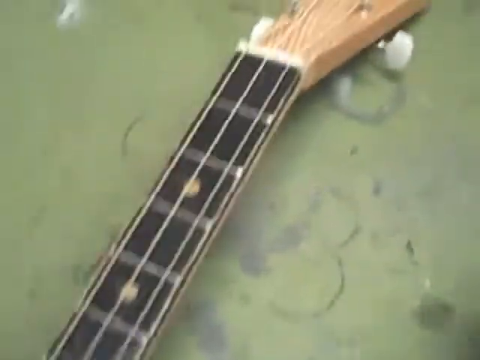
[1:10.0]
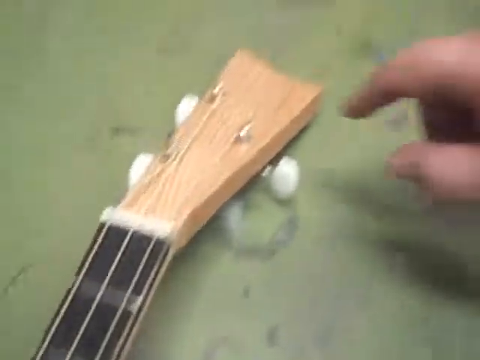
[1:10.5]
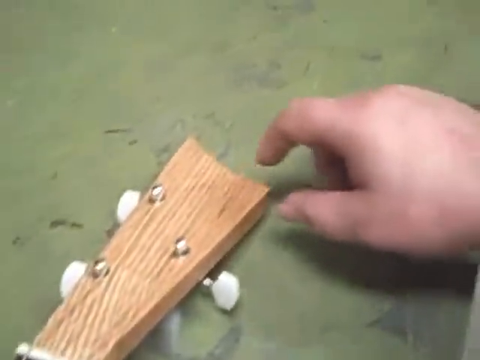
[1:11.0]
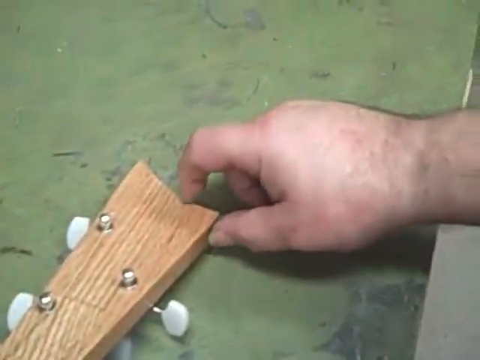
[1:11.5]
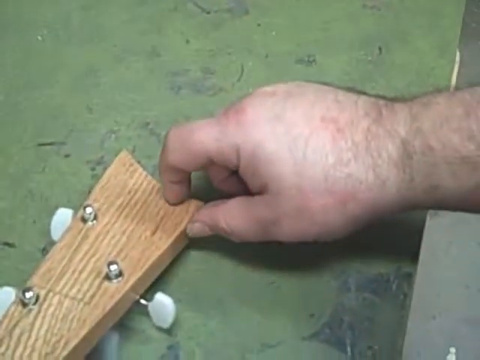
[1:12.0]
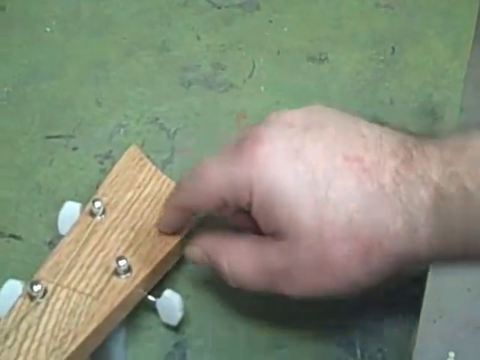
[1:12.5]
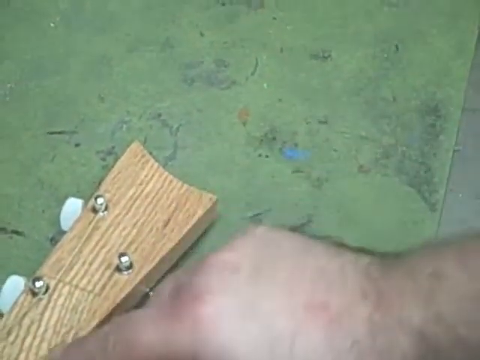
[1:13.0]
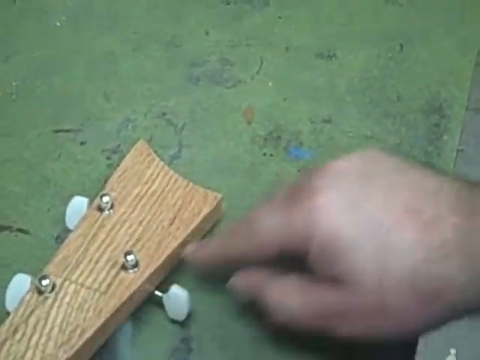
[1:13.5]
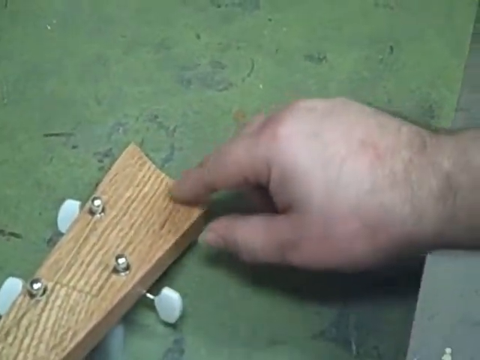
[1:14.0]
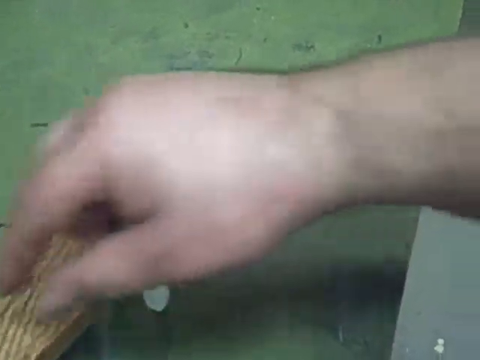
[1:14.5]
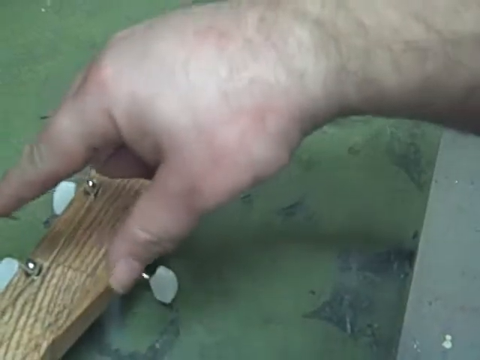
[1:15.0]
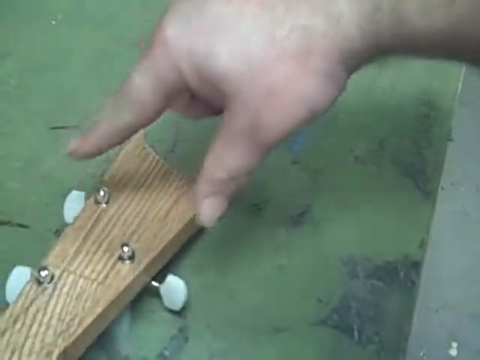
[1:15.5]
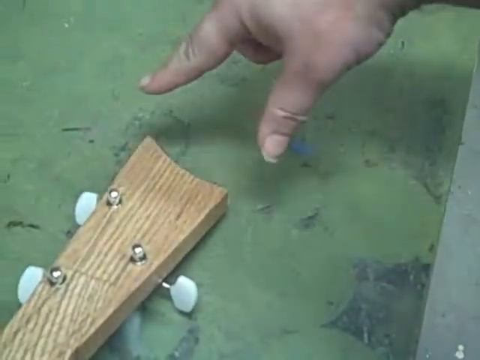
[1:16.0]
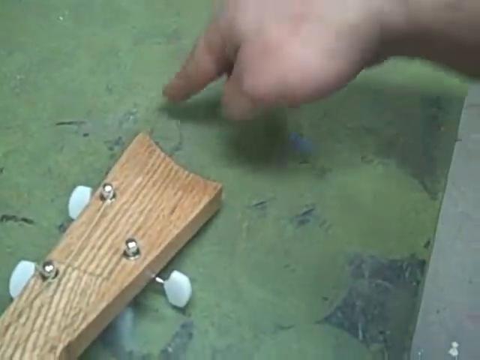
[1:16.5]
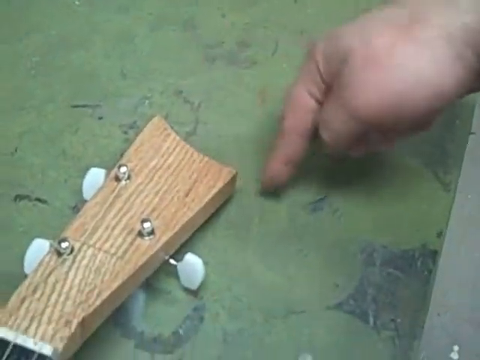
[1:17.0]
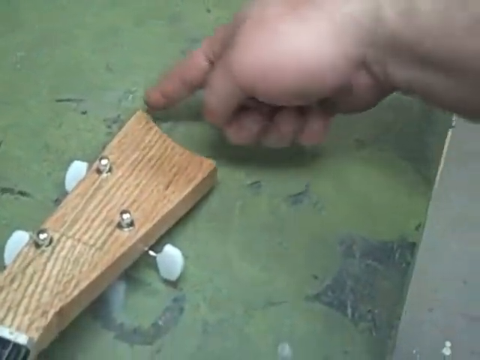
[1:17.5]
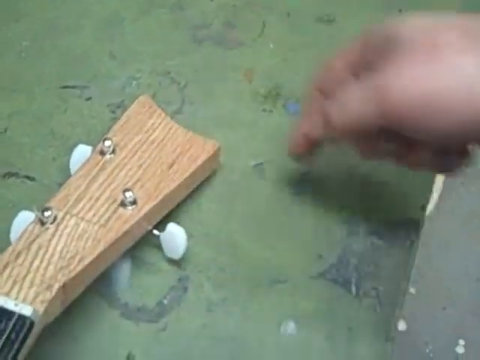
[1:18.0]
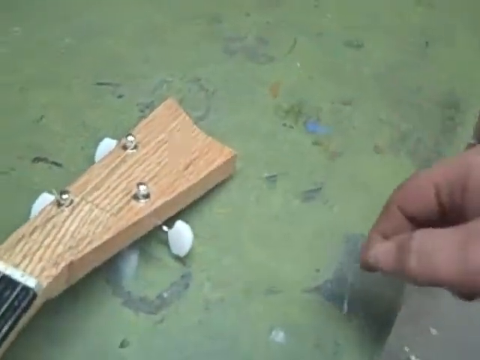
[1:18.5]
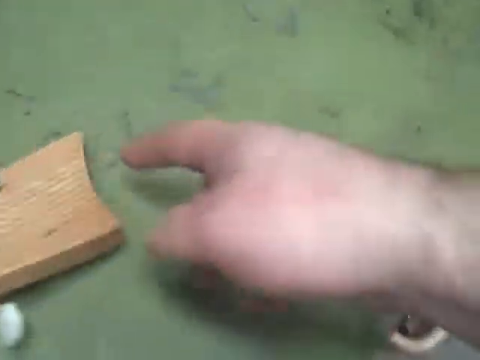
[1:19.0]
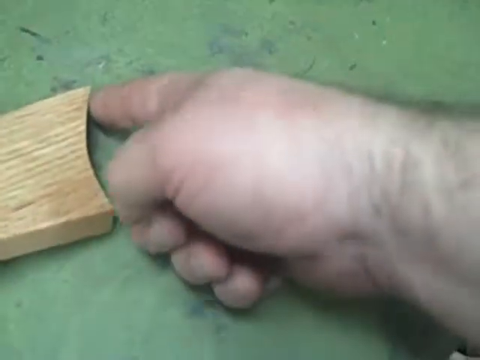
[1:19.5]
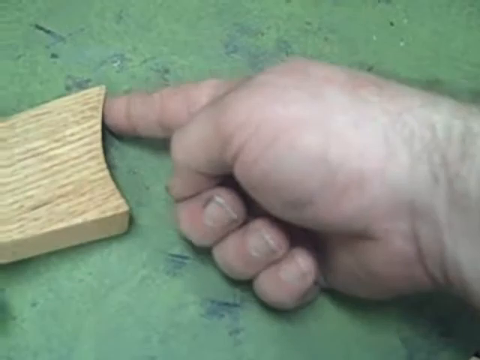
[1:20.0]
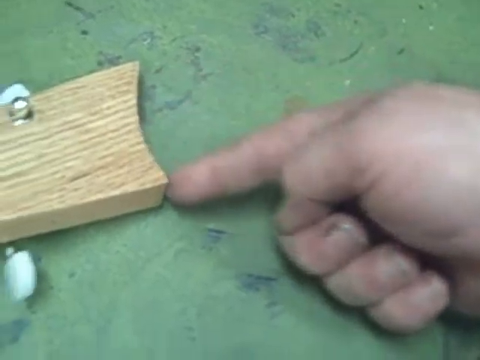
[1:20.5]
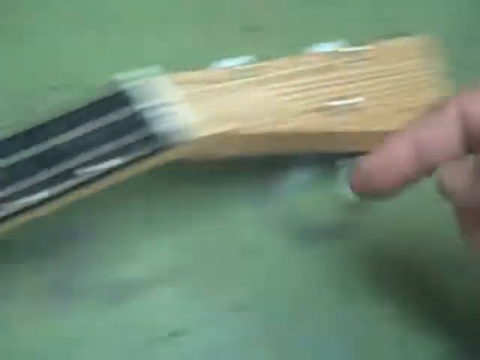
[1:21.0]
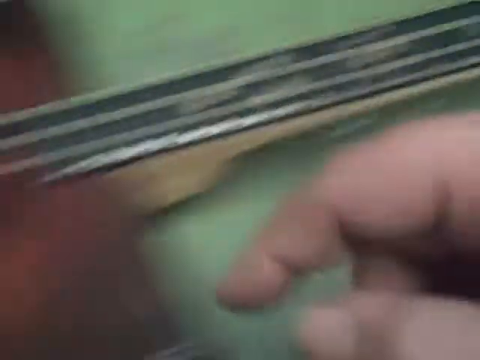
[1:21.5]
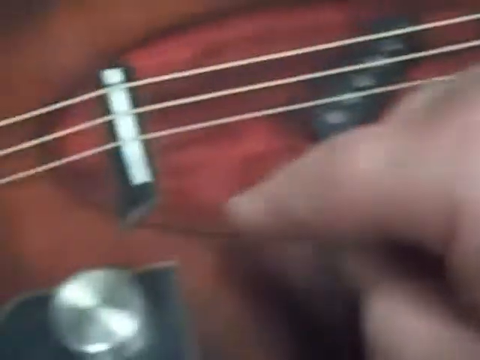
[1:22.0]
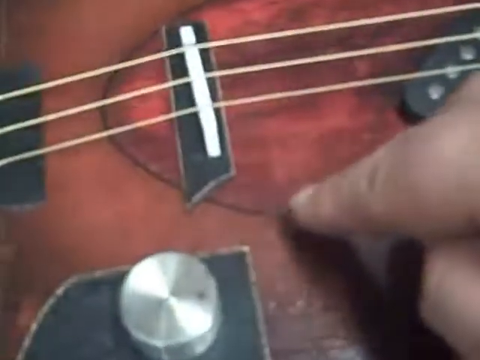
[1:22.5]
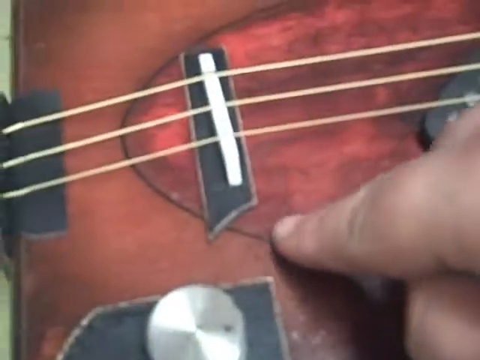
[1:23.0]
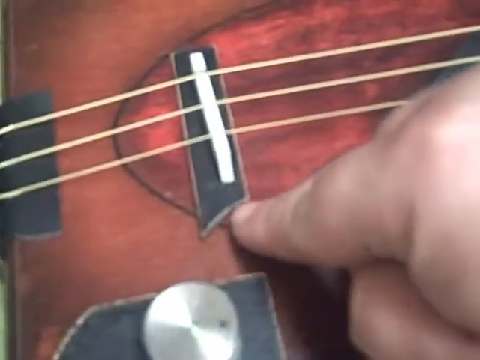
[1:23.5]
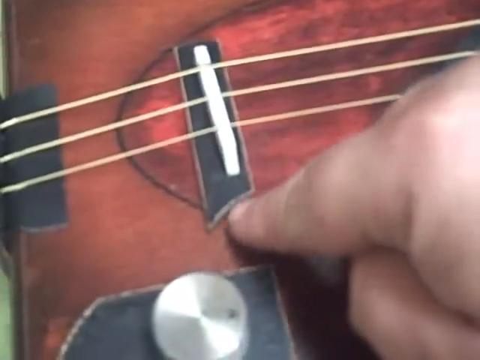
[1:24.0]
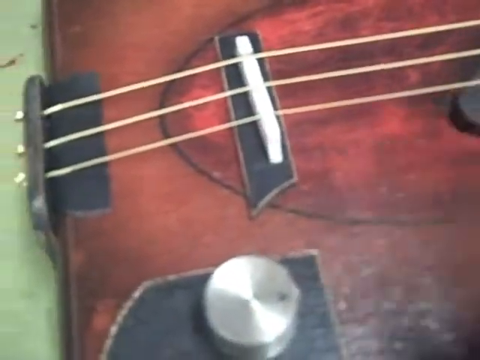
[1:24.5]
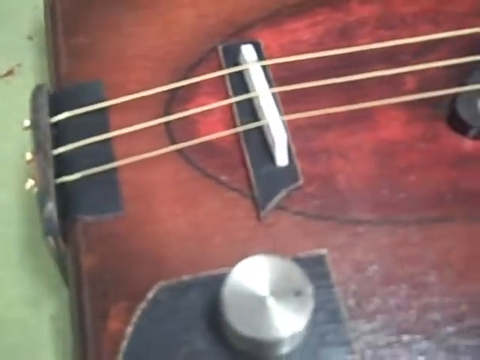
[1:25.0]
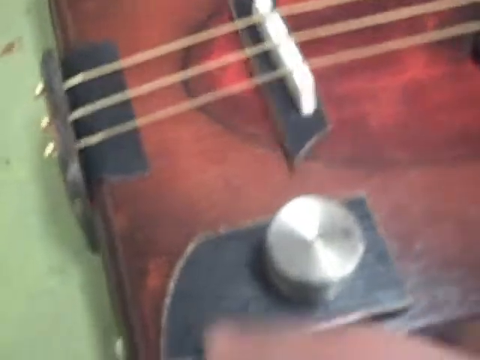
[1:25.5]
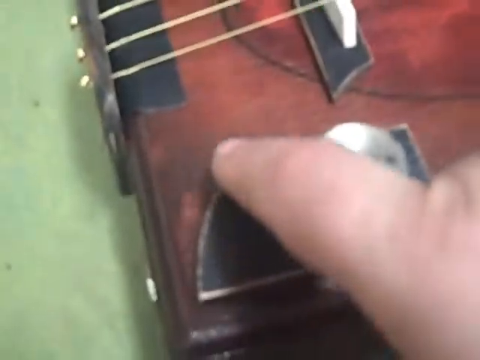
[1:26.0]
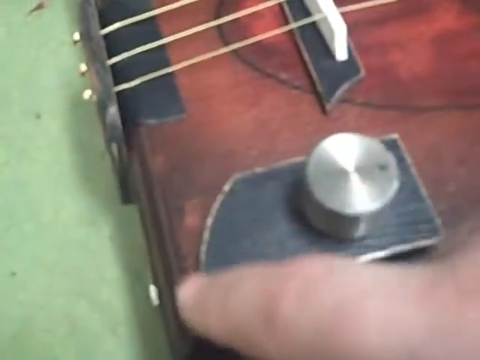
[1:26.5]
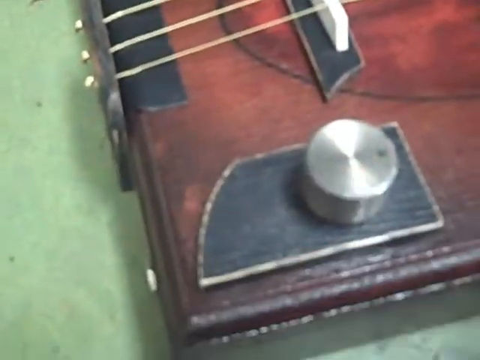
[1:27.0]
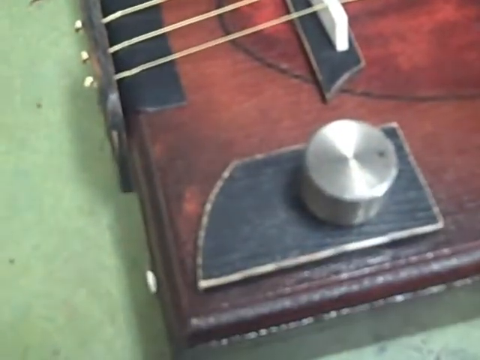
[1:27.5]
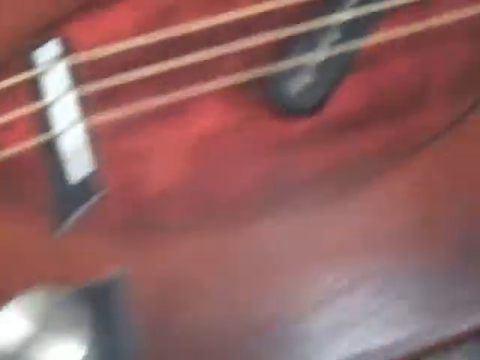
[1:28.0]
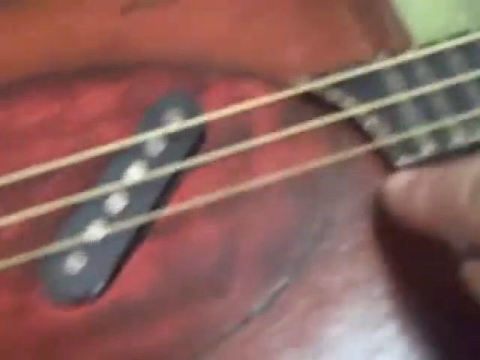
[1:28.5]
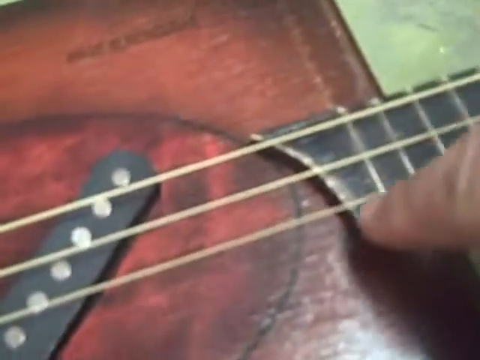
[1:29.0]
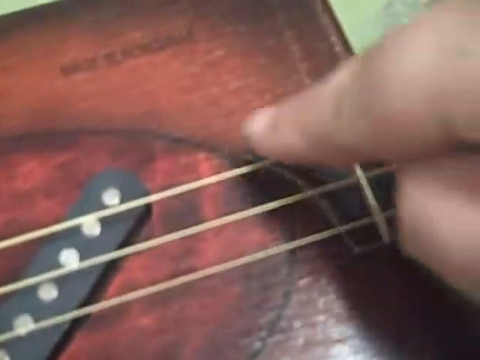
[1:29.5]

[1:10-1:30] From the arm of the guitar, the hand points to the handle, which is light brown, with three white bars on the side: two on the right-hand side and one on the left-hand side. There are three gold balls to which the strings are attached. From this angle, the person's arm is very hairy. The hand points at the curve at the end of the handle, showing how curved it should be. The focus then moves to the center of the guitar, pointing at another spot with a curve, then a third spot with a curve, and the finger points at a fourth spot with a curve, probably showing all the spots on the guitar that should have curves.